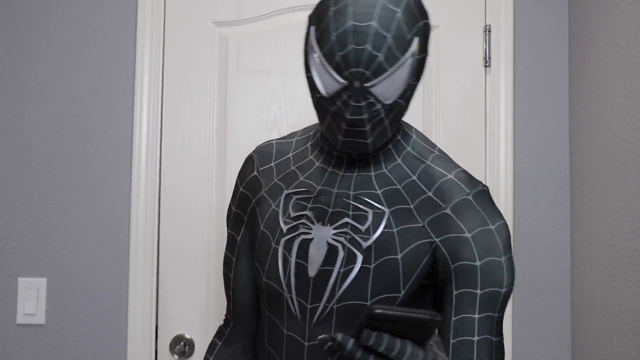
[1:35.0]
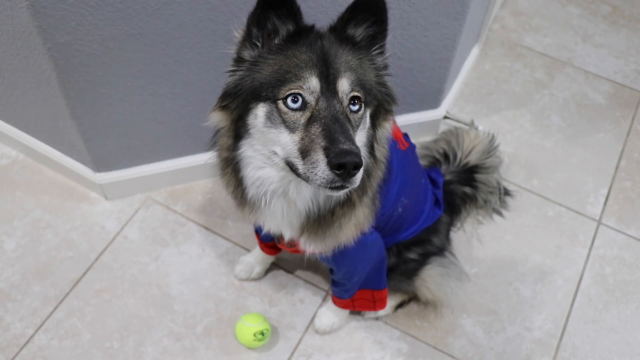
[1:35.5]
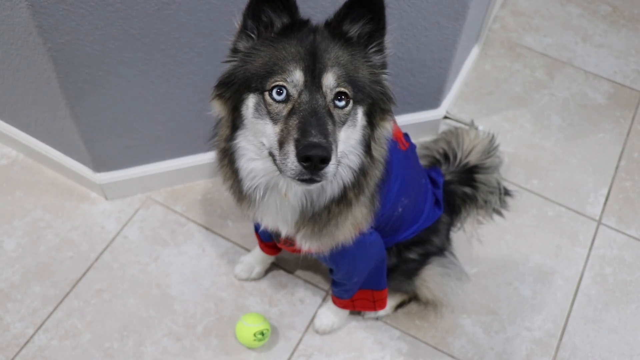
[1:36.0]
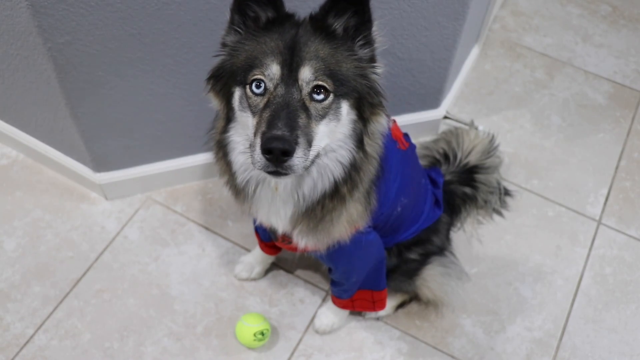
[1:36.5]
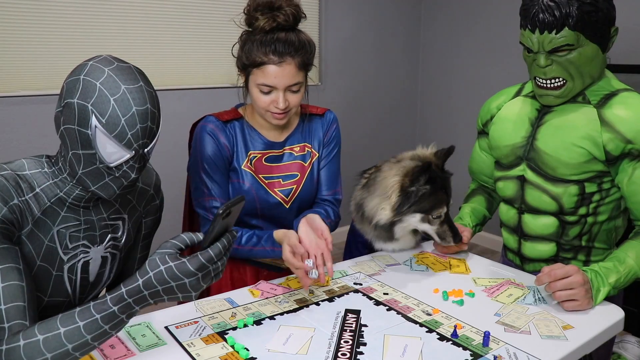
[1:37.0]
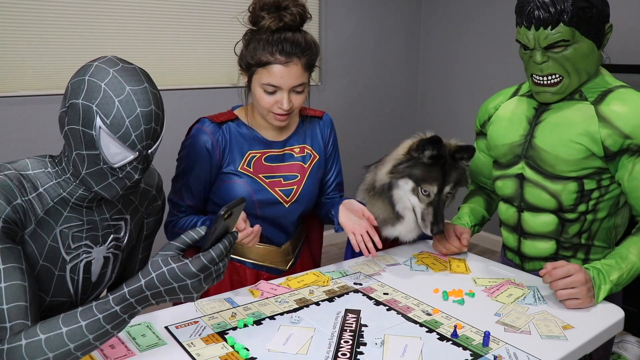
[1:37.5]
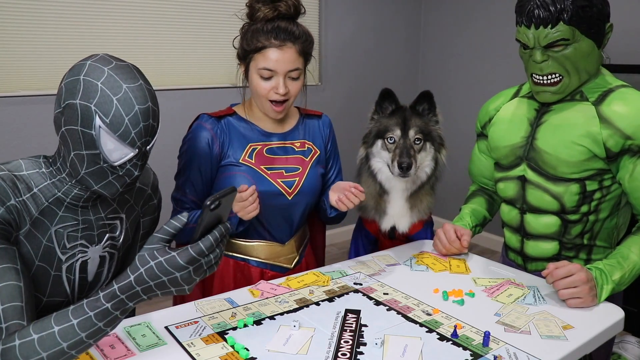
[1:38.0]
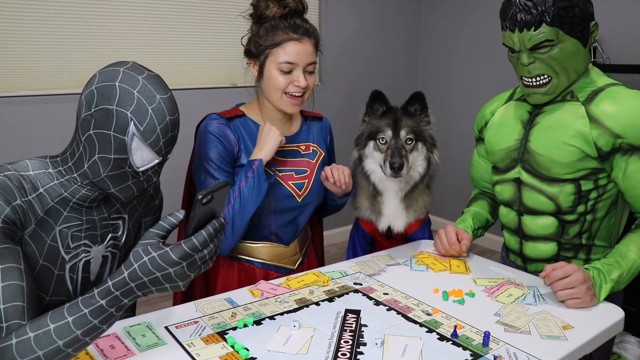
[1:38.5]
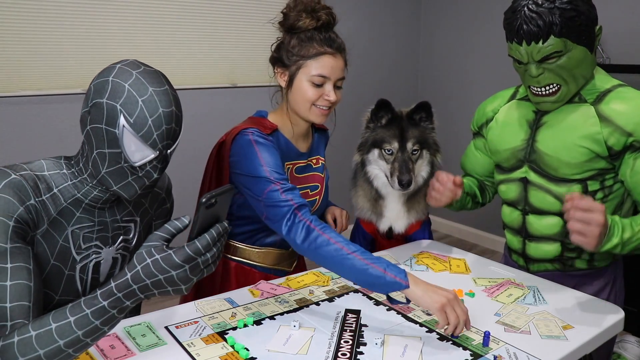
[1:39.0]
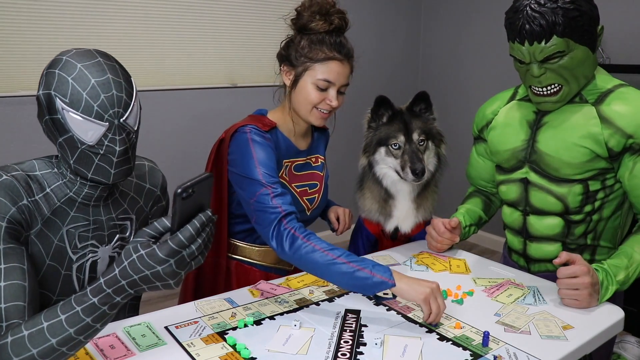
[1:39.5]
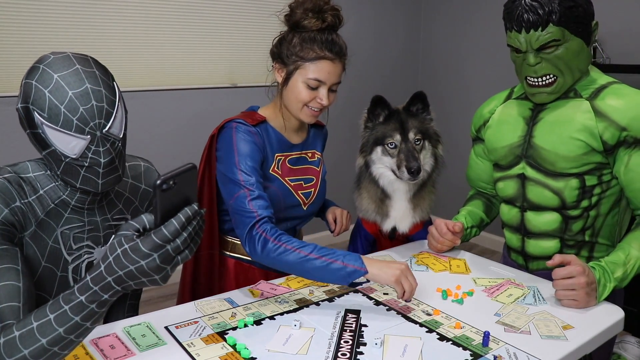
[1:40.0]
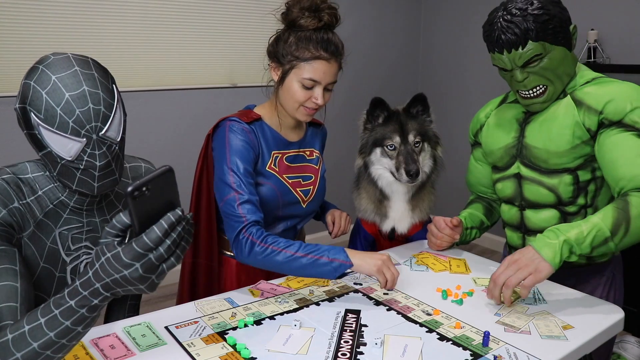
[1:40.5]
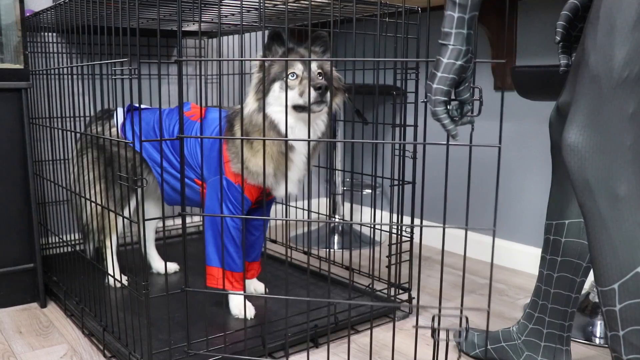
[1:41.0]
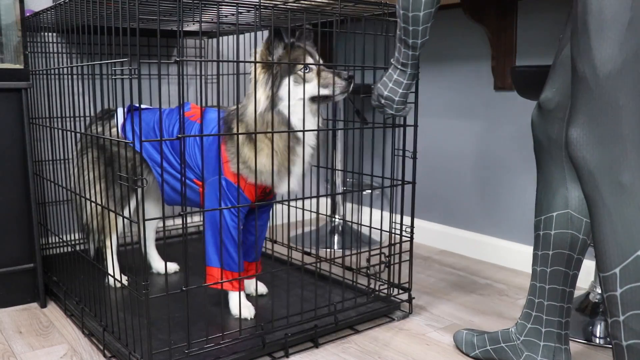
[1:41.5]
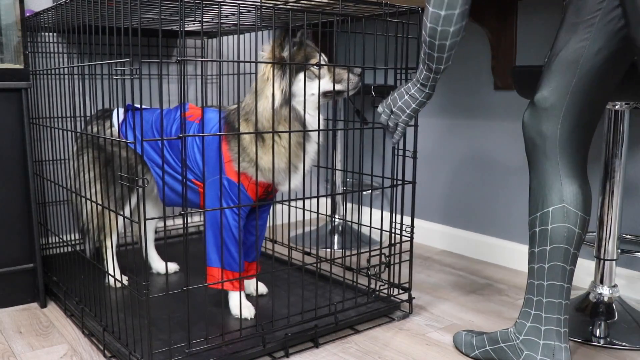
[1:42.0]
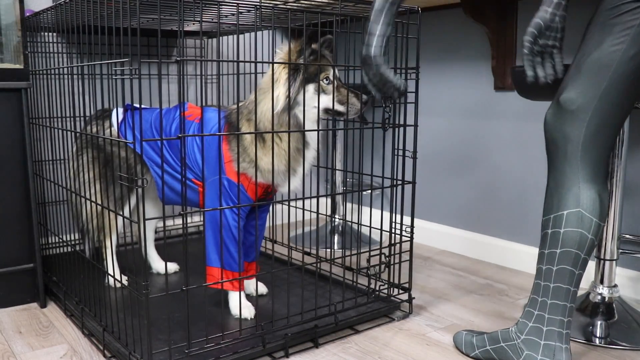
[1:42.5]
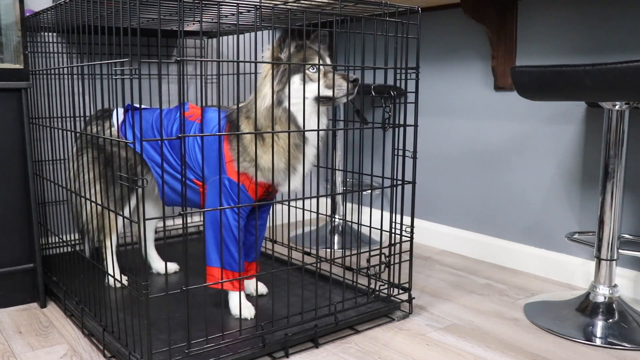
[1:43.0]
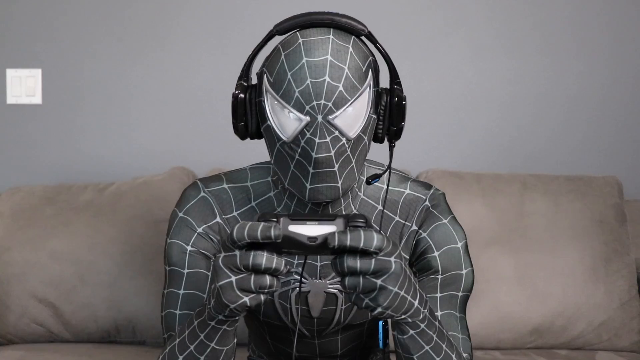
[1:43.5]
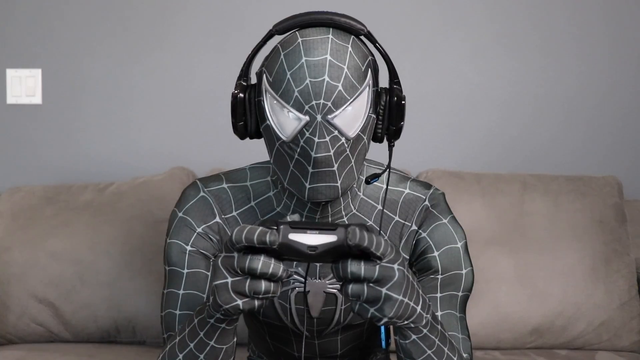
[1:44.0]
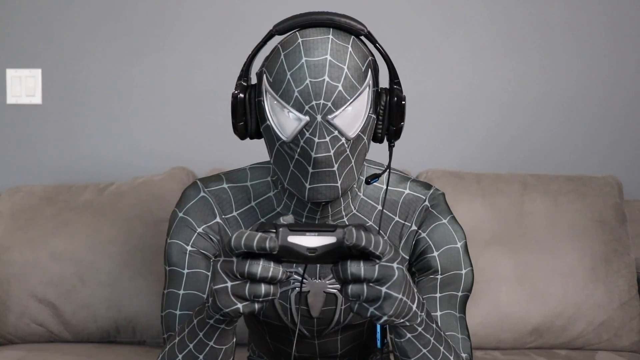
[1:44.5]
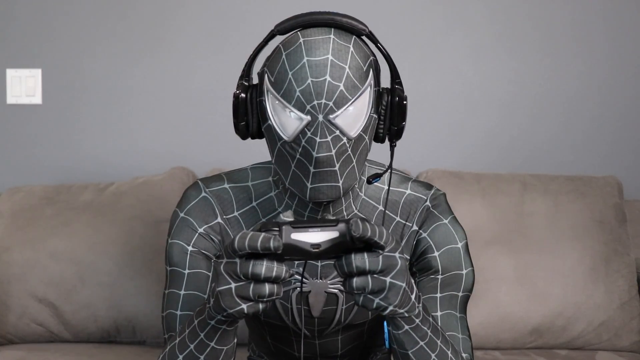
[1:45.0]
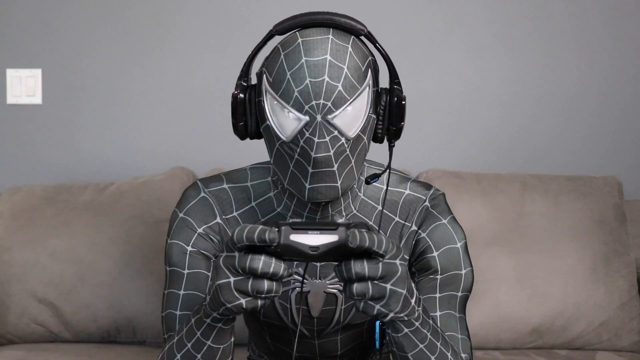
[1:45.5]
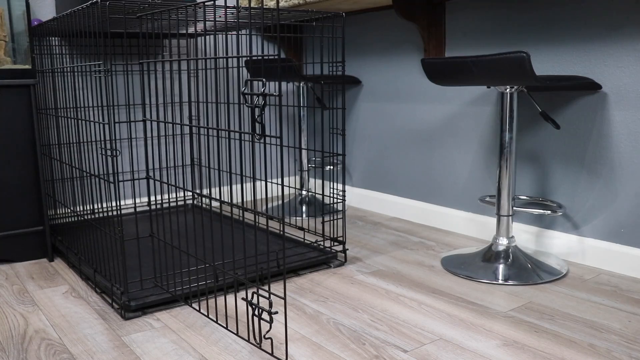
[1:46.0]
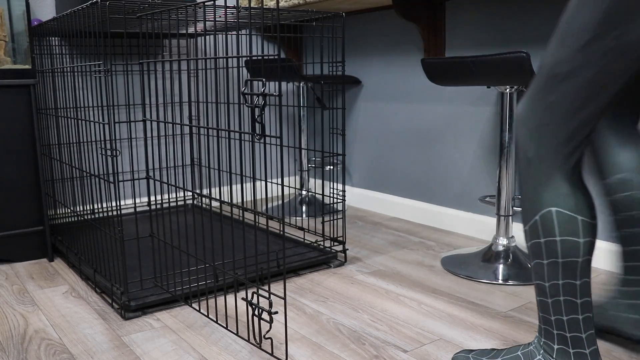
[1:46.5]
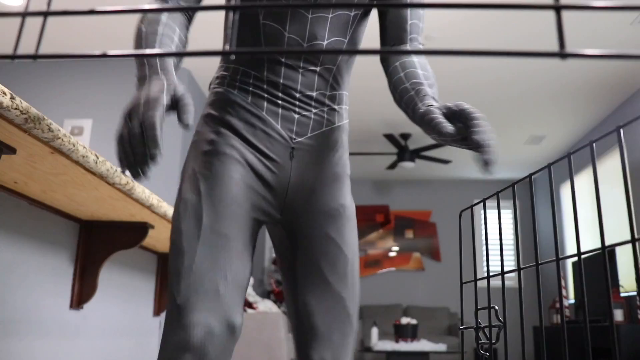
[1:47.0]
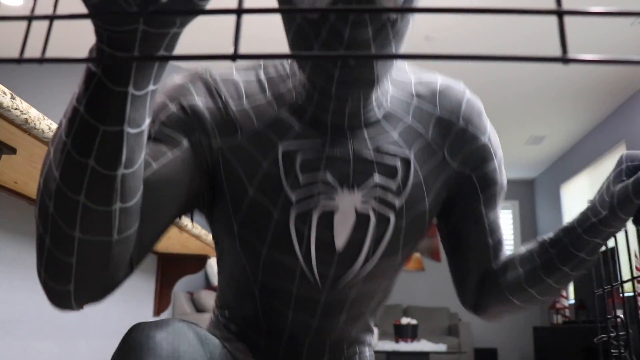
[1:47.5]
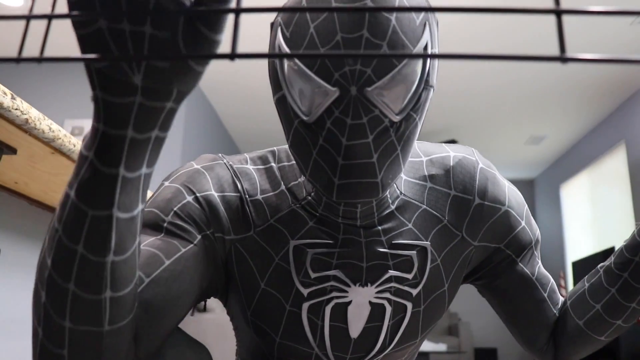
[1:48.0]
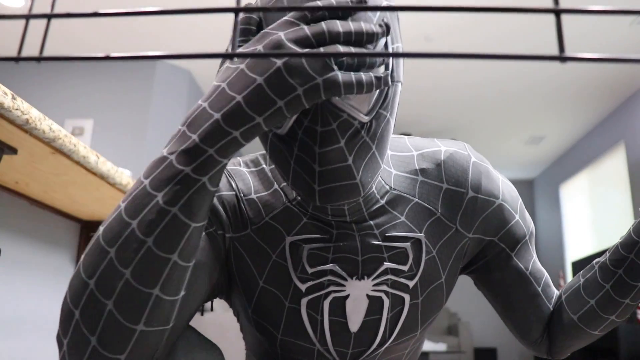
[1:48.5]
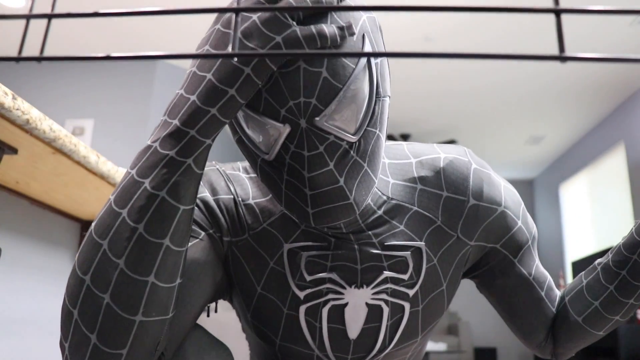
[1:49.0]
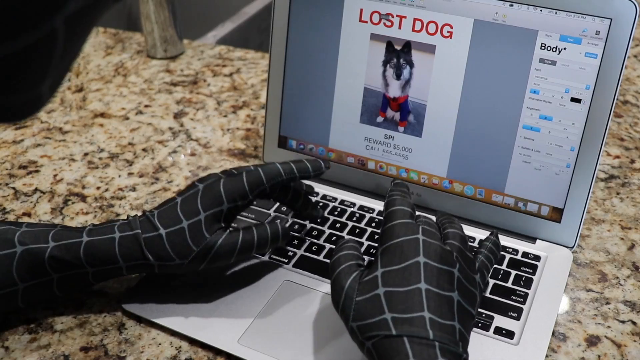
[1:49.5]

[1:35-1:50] Titled "The Life of Spider-Dog," the video shows Spider-Man in his dark grey costume and the dog in the red and blue Spider-Dog costume. He plays a board game with his friends, the Incredible Hulk and Supergirl. After that he is on his phone, then puts the costumed dog in a dog crate and closes the door. When he goes back to the crate, it is empty and the dog is gone. He goes to the computer and types in "lost dog," with a picture of the dog wearing the uniform. A brief flash shows the dog with a tennis ball on the floor.